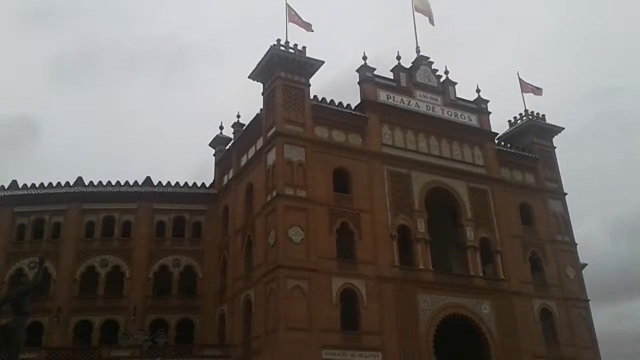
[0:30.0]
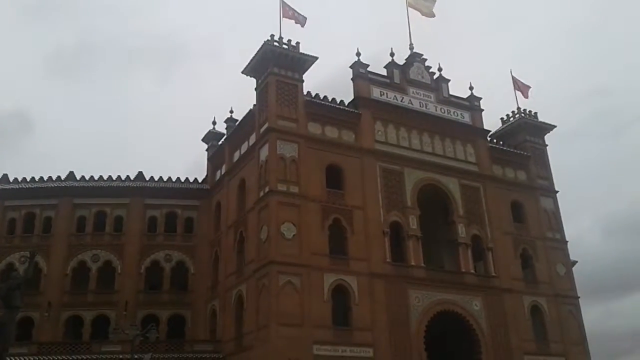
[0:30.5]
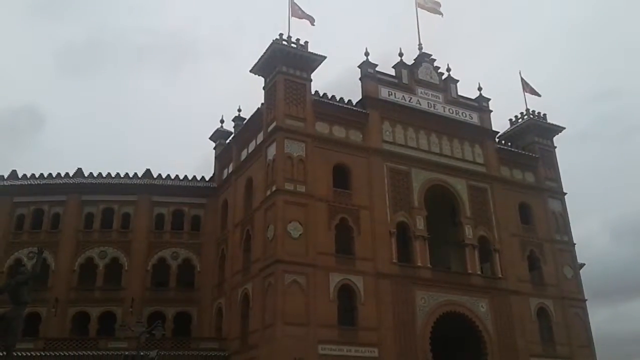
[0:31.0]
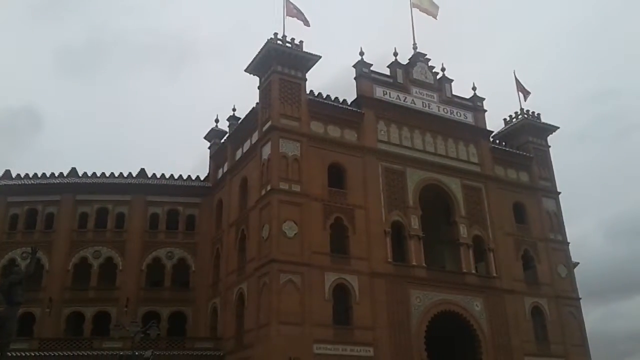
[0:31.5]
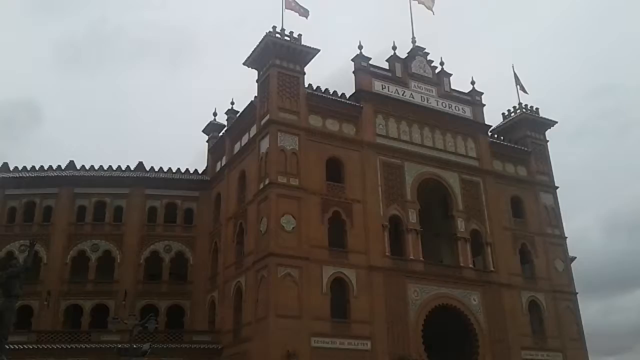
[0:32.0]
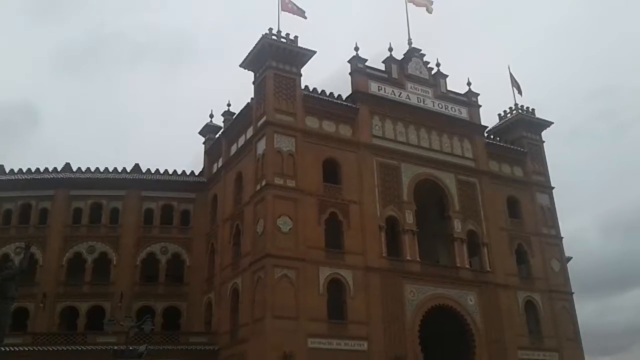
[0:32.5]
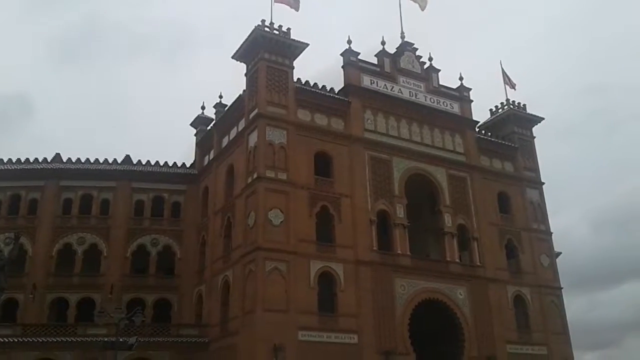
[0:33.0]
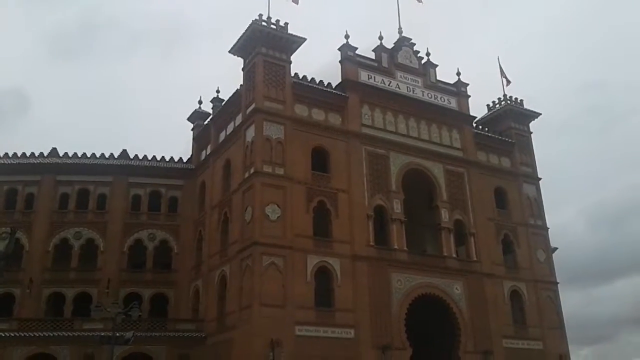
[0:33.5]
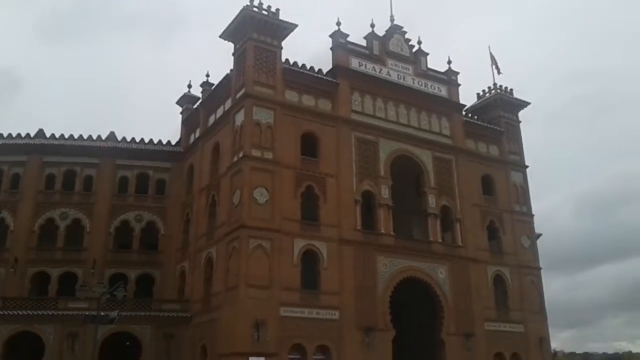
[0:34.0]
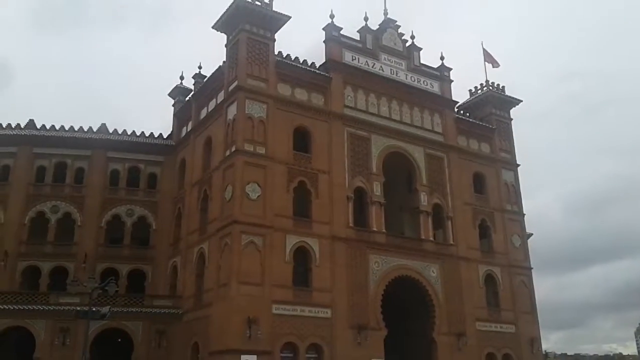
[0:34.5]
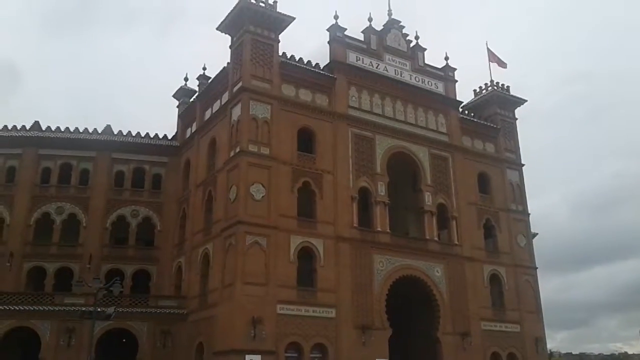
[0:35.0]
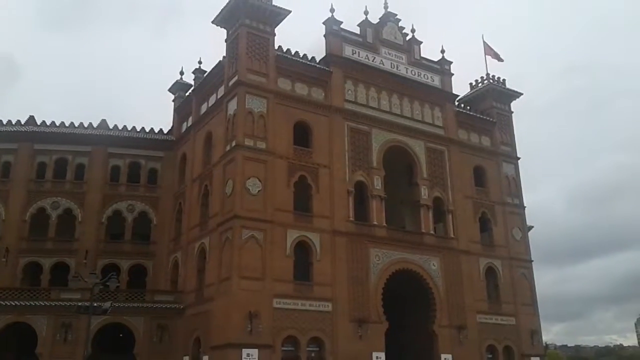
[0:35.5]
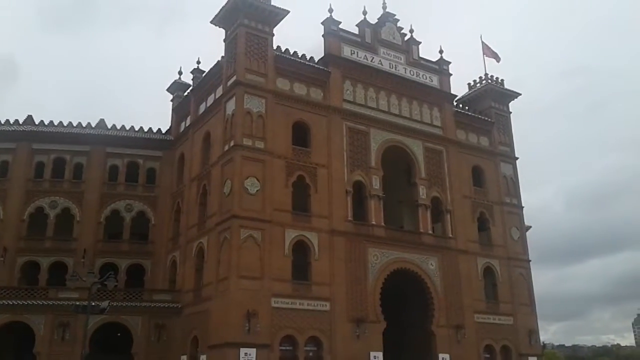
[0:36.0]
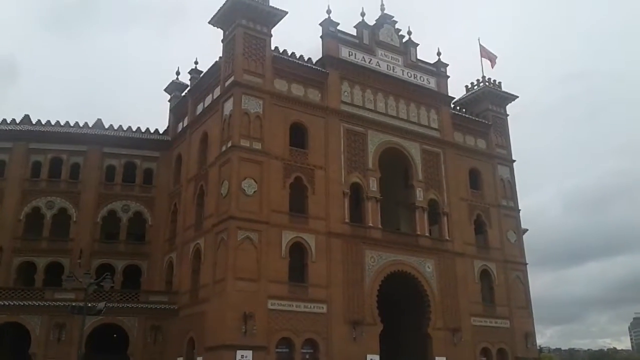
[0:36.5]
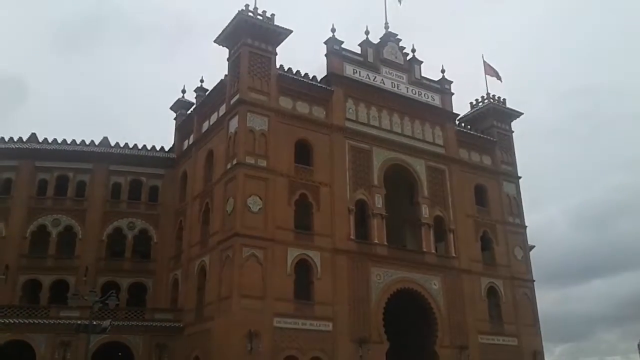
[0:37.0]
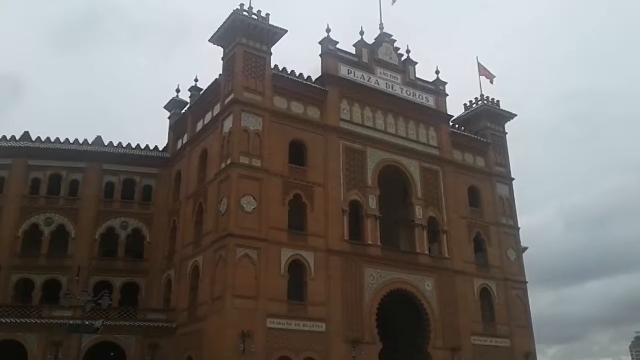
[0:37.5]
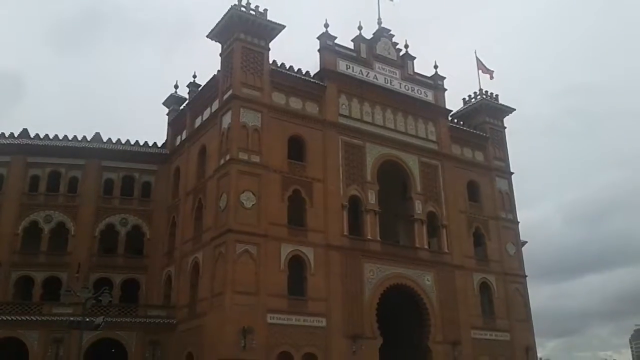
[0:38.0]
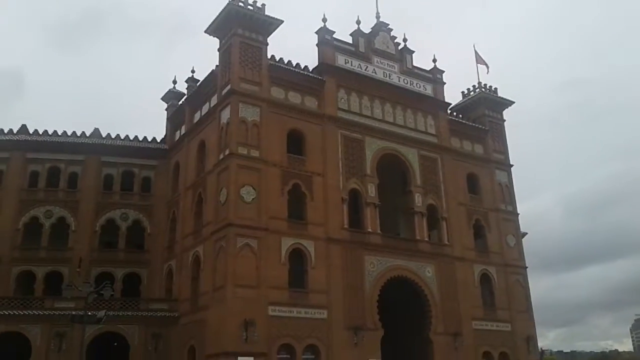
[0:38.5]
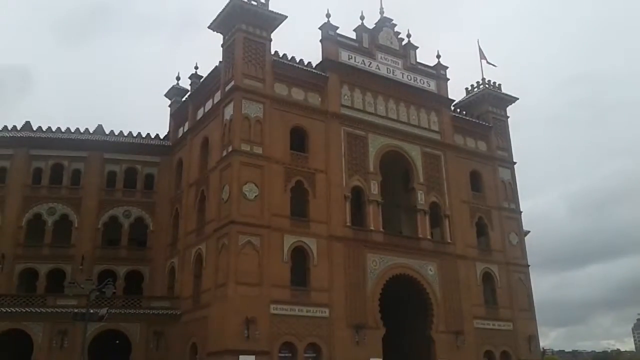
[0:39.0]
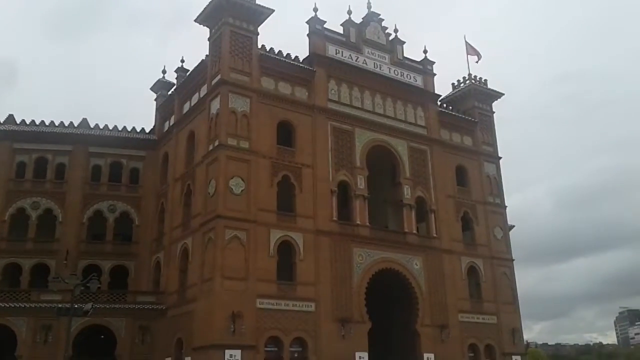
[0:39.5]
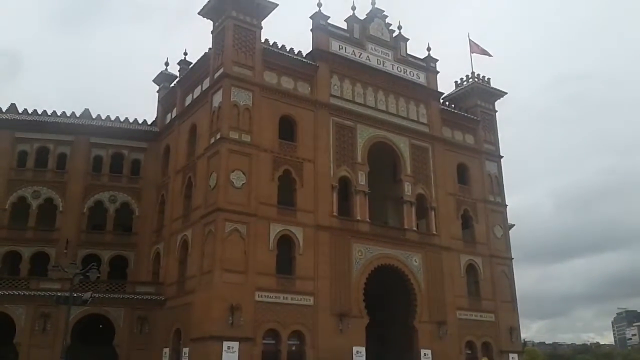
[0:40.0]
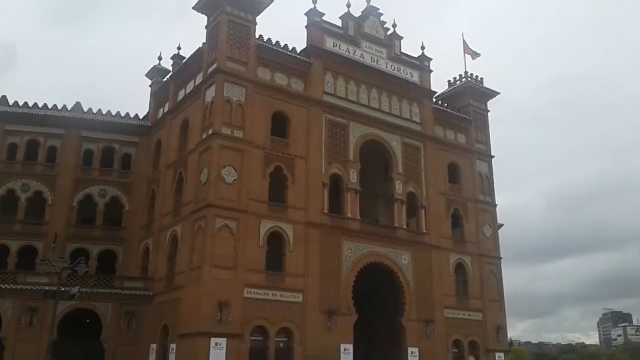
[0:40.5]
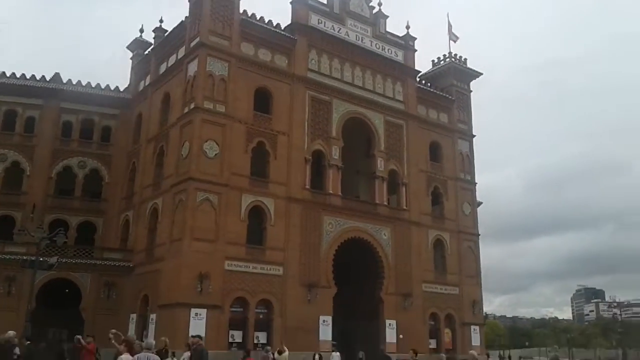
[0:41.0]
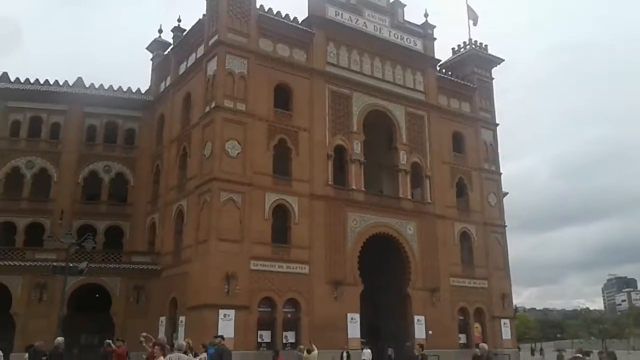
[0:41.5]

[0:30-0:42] The Plaza de Toros is shown with the rain more visible and the clouds a bit darker. The entryway of the building is rectangular with sharp corners, made of red brick or clay with frescoes. The windows and doors are all formed into archways. There are three flags; two appear to be red, and the color of the other can't be made out against the cloudy sky. At the side, the building curves into a coliseum-like shape with archways covering the walkways. Near the end, the camera pans down and a few people can just be made out, though not clearly enough to see who they are, what they are wearing or what they are doing.